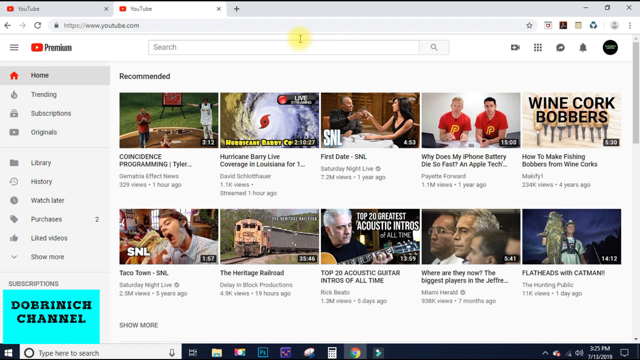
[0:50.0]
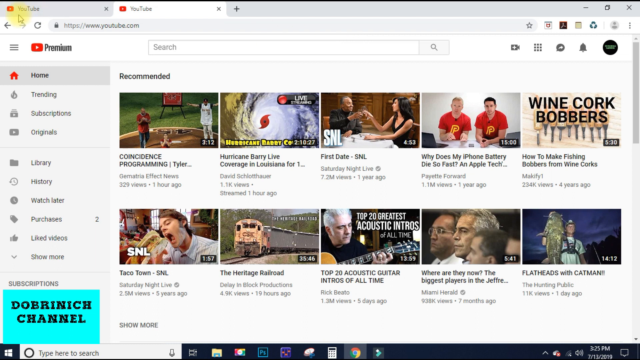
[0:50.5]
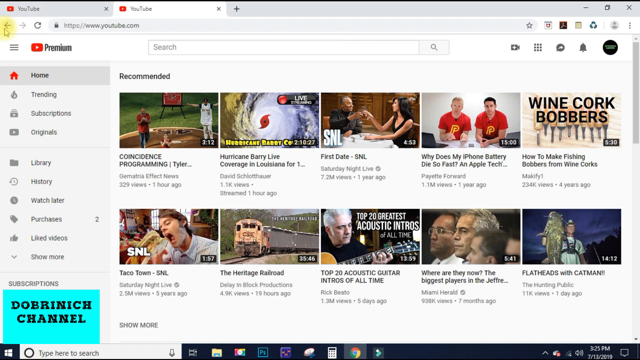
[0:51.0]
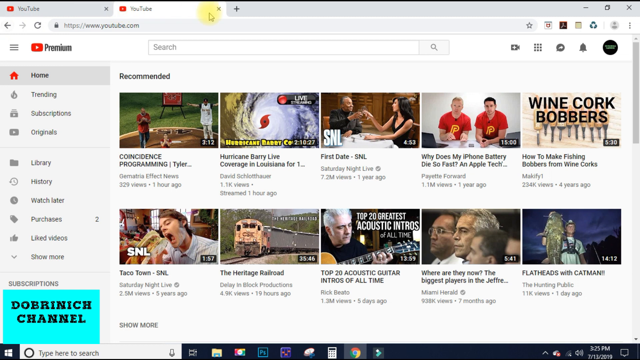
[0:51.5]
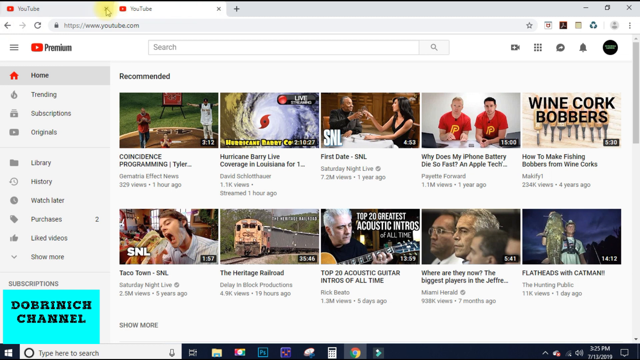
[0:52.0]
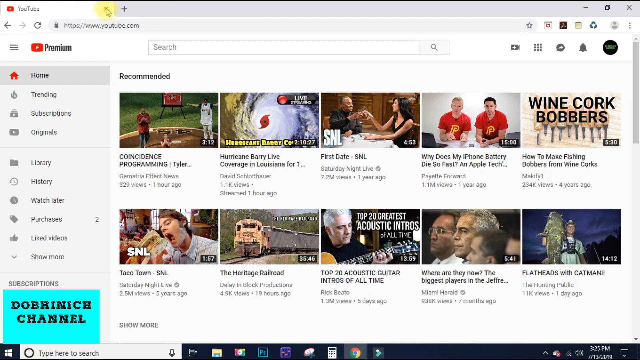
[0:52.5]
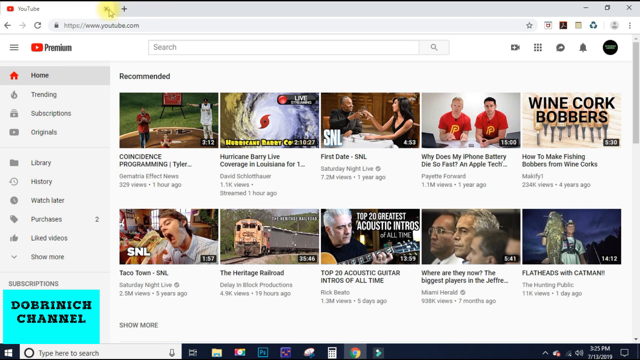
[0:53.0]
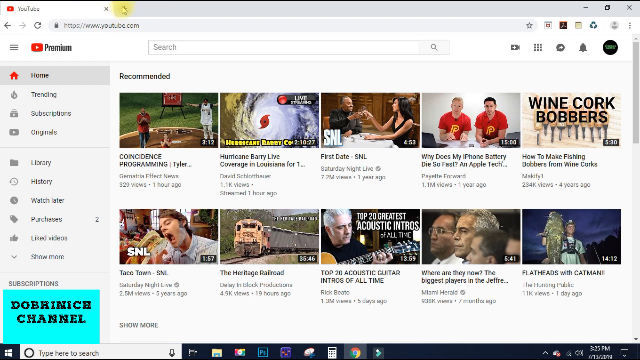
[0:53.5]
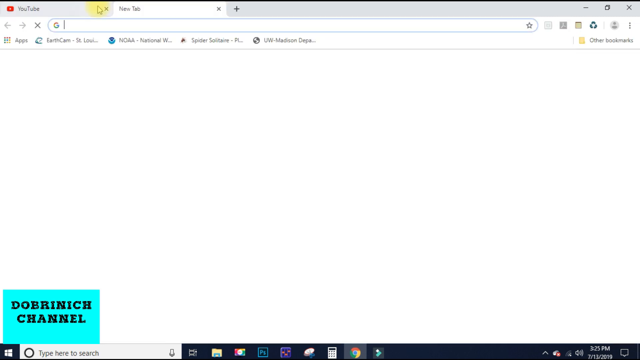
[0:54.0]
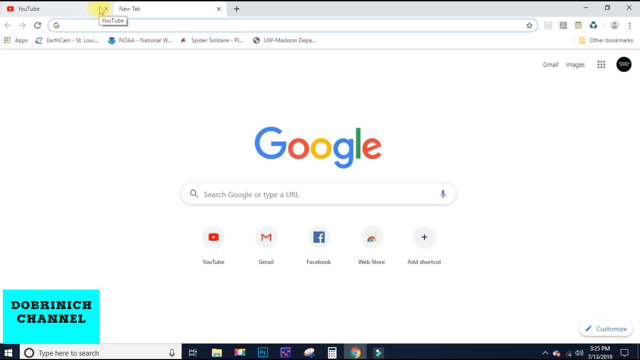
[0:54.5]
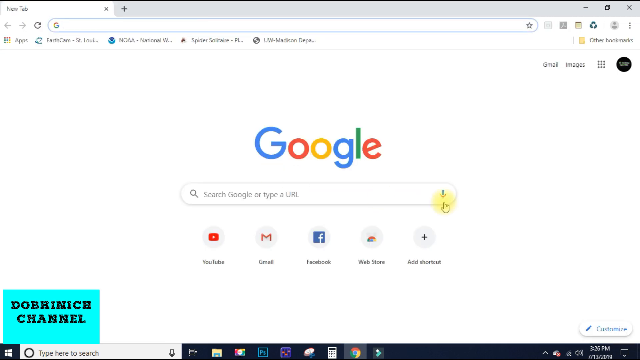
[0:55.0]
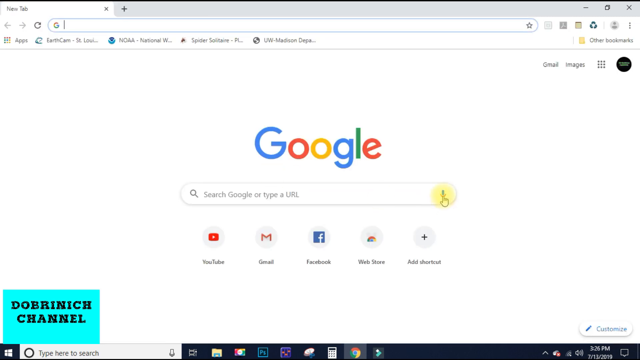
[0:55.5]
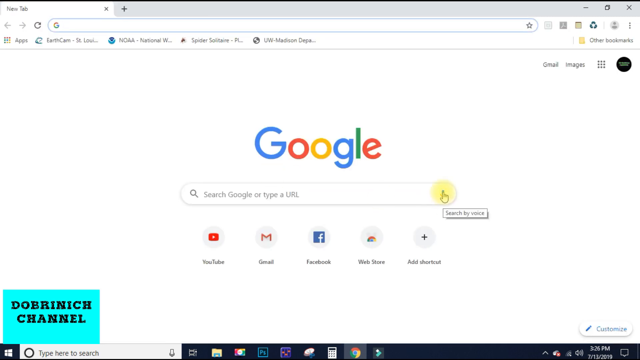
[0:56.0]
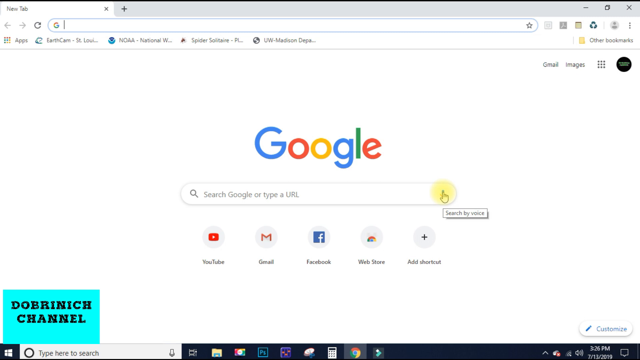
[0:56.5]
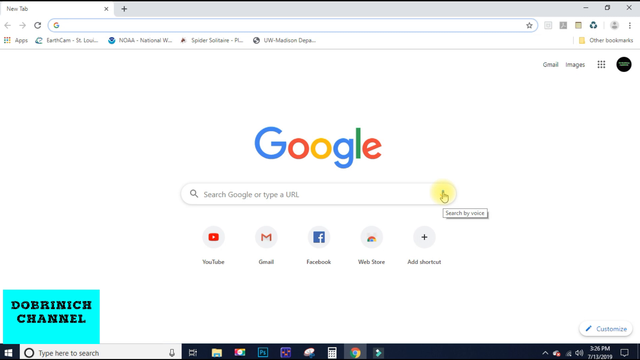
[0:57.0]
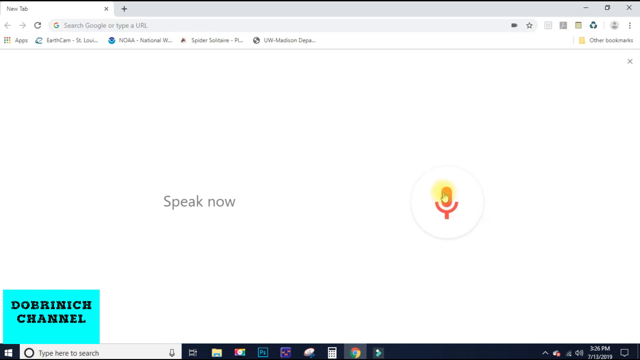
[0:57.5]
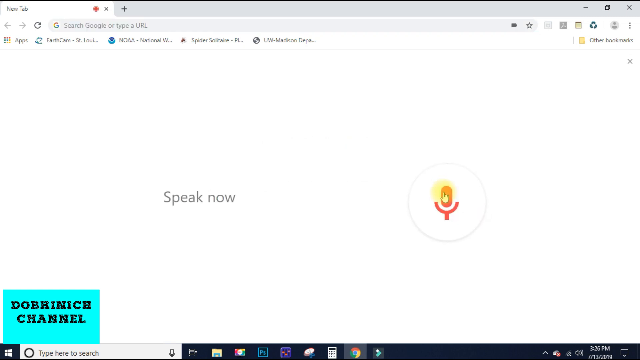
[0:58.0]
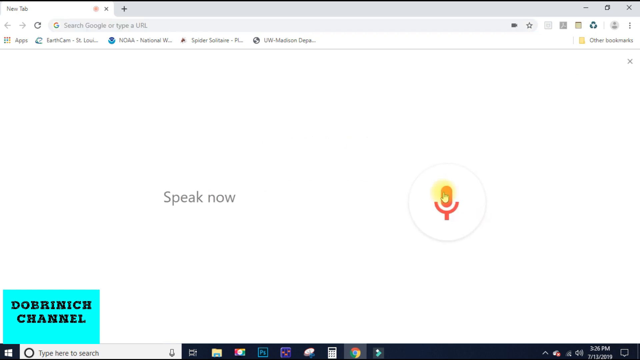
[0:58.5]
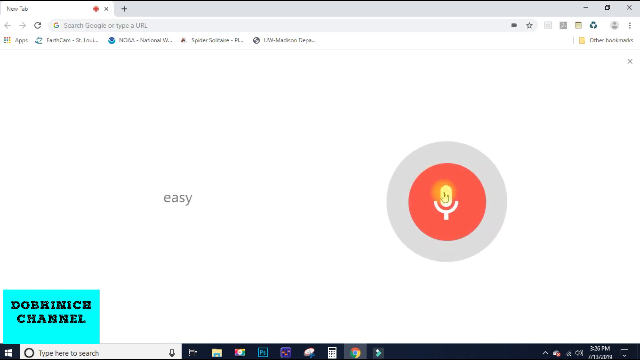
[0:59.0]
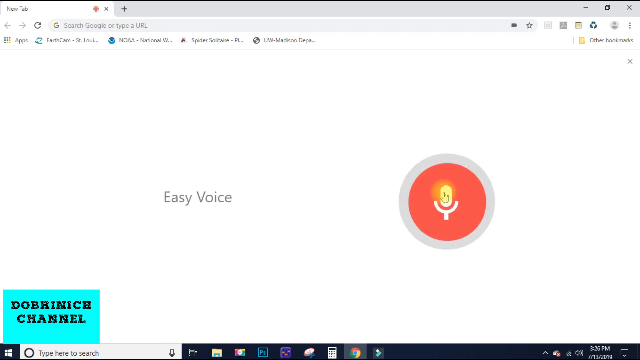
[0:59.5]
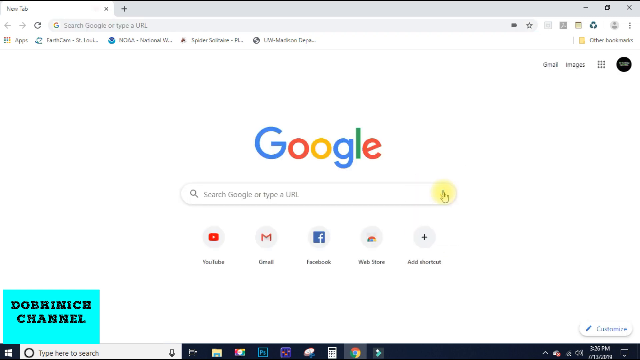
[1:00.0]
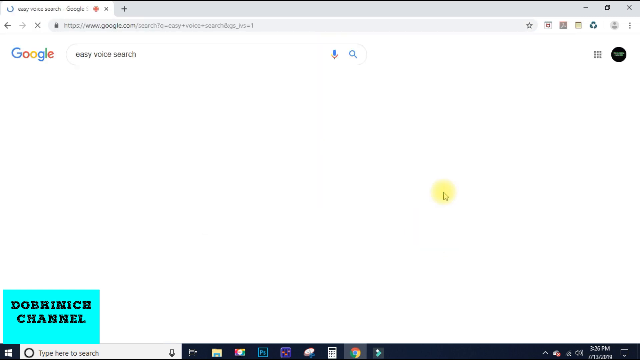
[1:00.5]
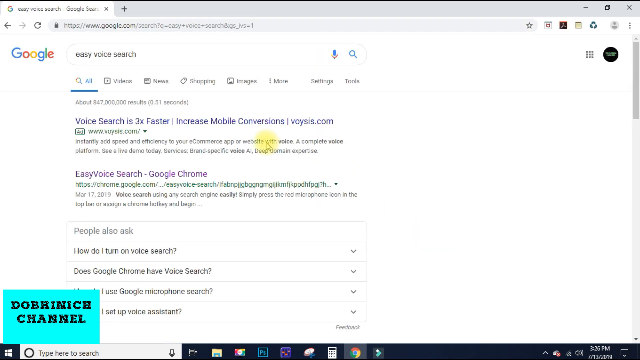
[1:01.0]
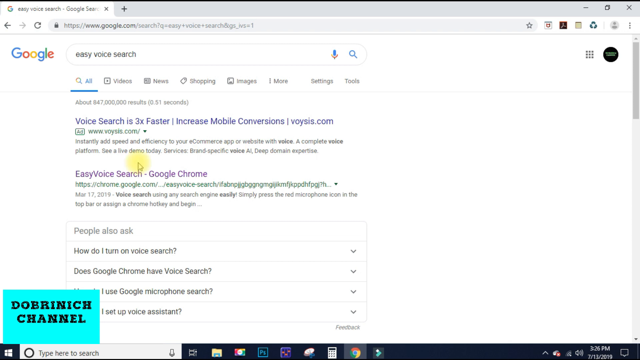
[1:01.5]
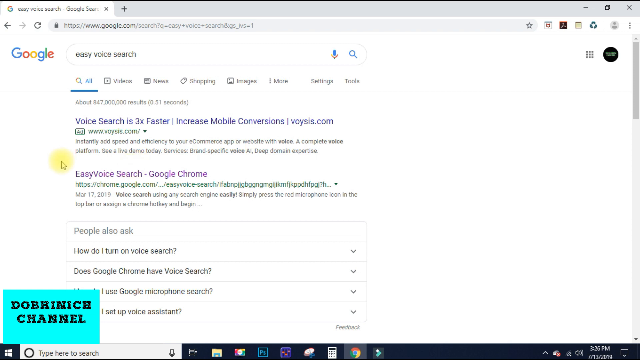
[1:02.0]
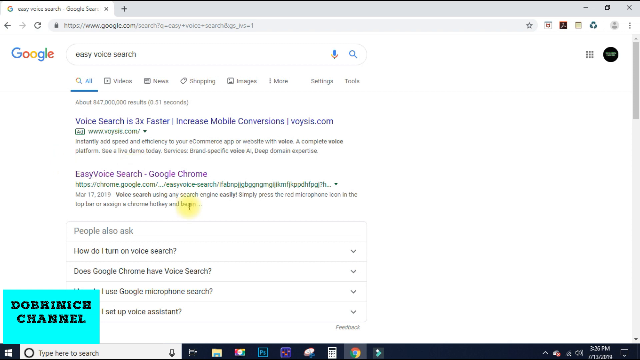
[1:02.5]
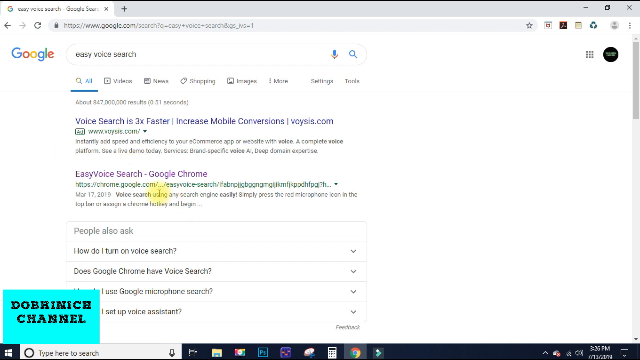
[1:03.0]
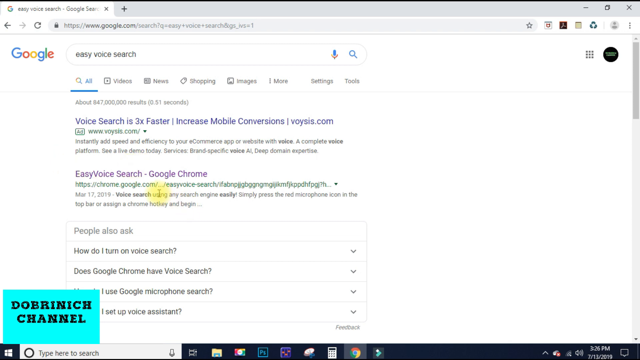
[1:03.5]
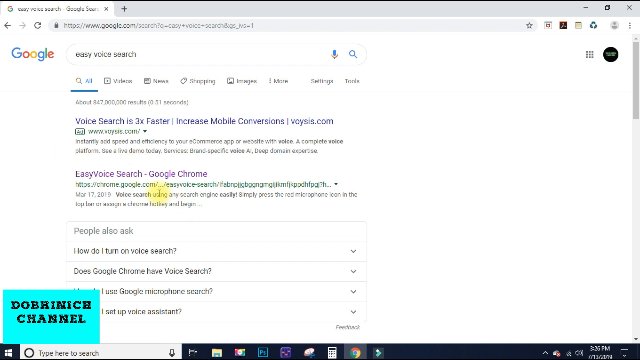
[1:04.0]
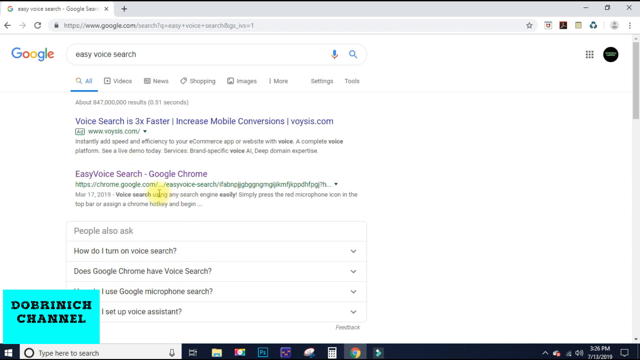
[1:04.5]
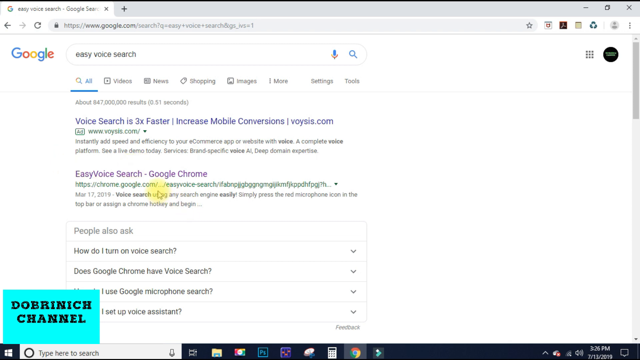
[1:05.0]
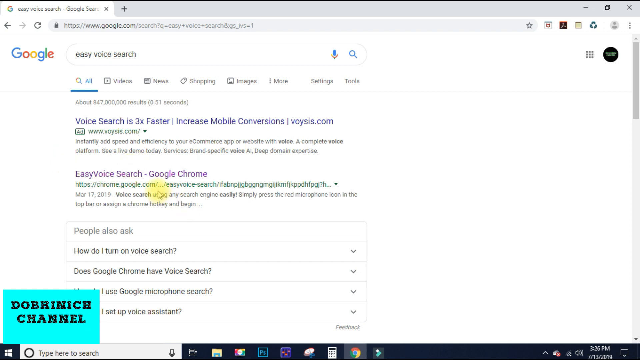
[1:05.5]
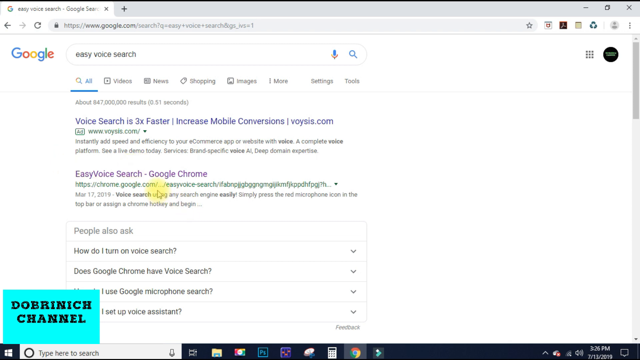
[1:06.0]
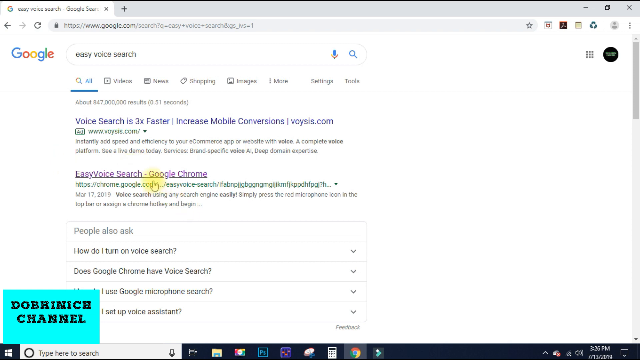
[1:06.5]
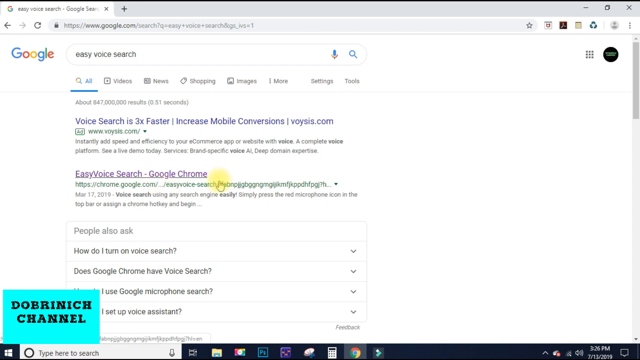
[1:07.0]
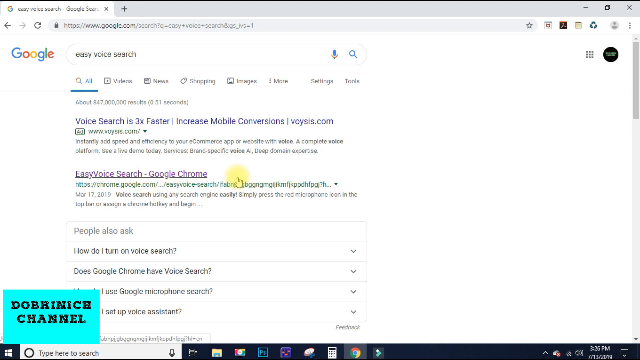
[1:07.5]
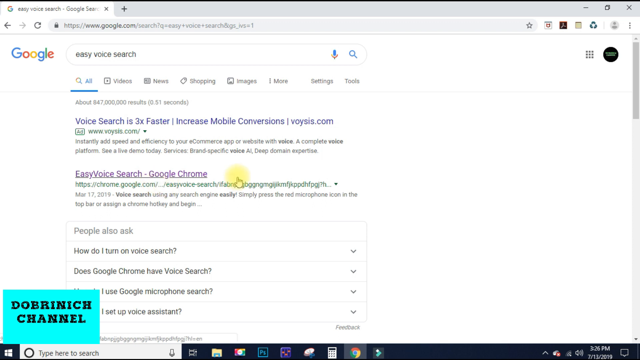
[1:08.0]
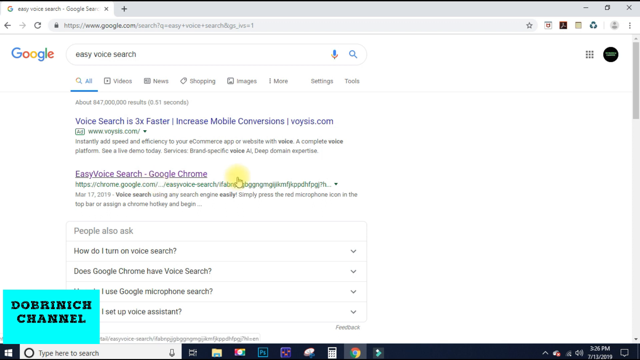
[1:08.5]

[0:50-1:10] The YouTube page stays on screen, with a variety of recommended videos below, such as Coincidence Programming by Germatria Effect News, Hurricane Barry Live coverage in Louisiana by David Schloftower, and First Date SNL by Saturday Night Live, among others. He closes one of the YouTube tabs at the top, the original one on the left, and opens a new tab. He hovers over the microphone to the right of the Google search bar and clicks it, which makes the microphone appear larger and red, and to the left it says "Easy Voice Search". This searches Google for Easy Voice Search, and different websites come up, such as Easy Voice Search Google Chrome and, at the top, Voice Search is Three Times Faster. He hovers over the Easy Voice Search Google Chrome result, with the yellow circle highlighting it.